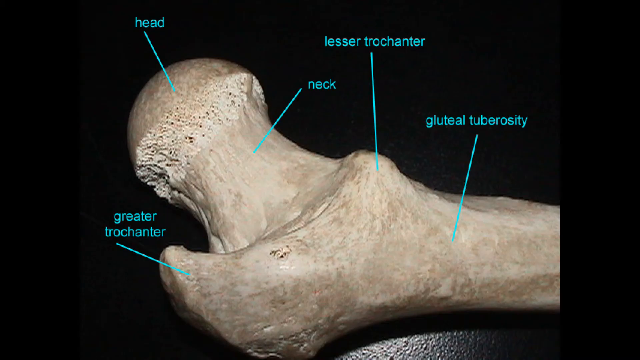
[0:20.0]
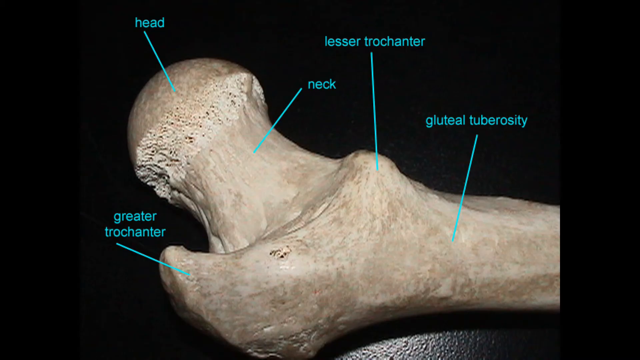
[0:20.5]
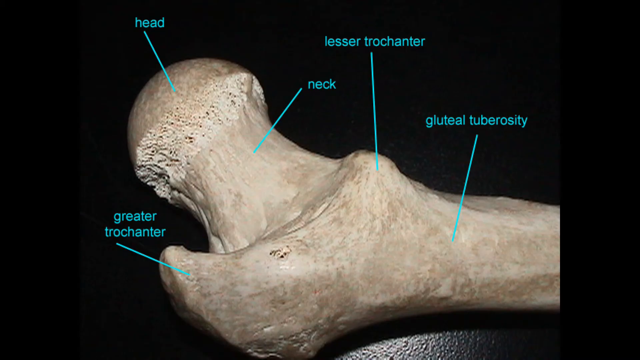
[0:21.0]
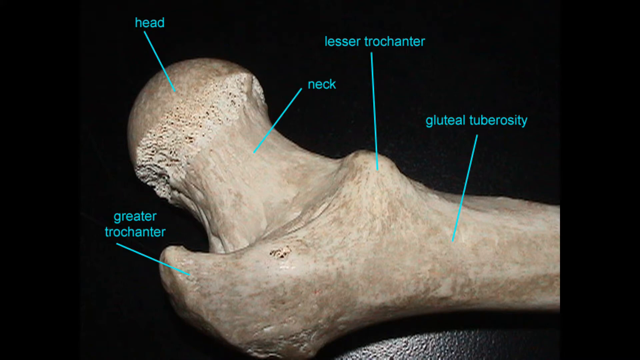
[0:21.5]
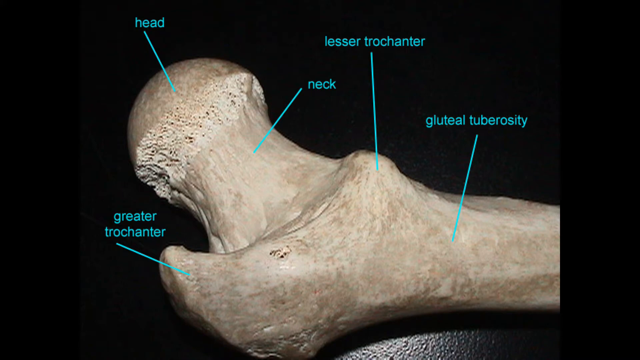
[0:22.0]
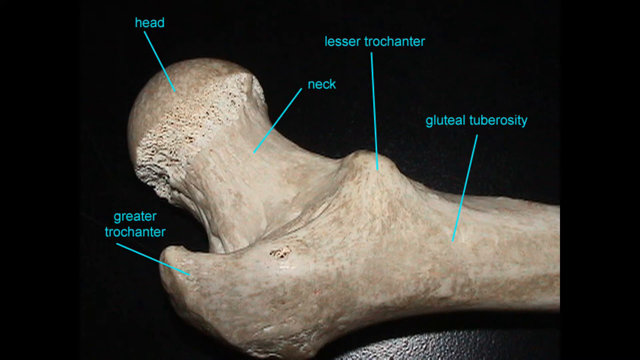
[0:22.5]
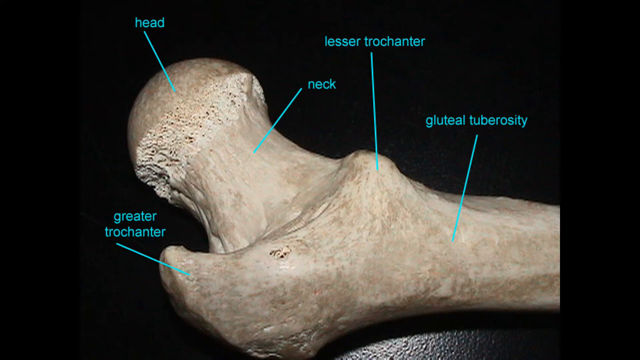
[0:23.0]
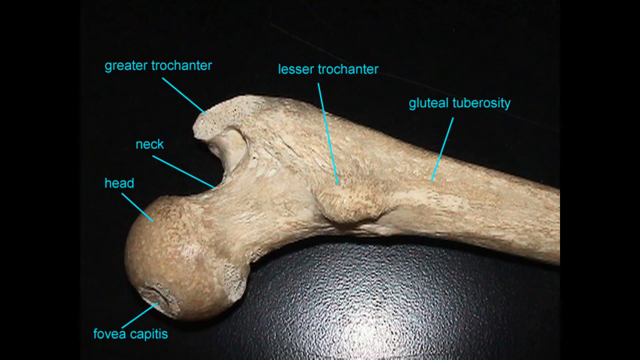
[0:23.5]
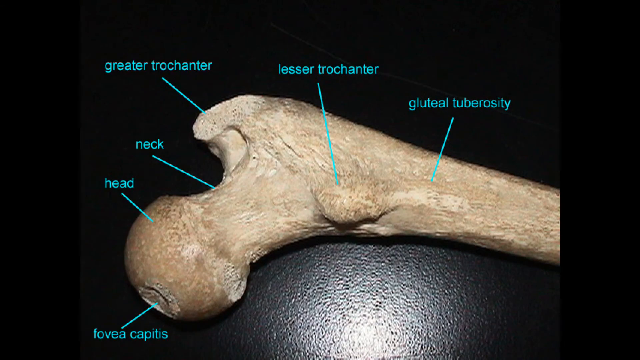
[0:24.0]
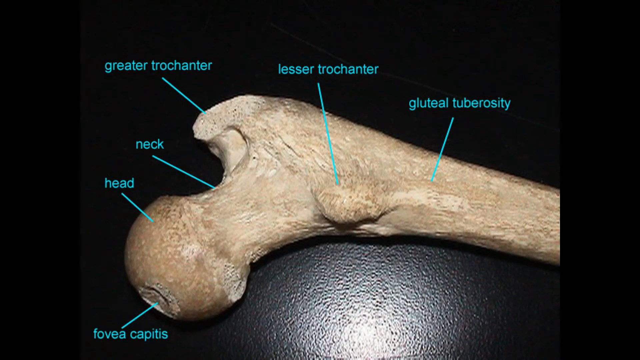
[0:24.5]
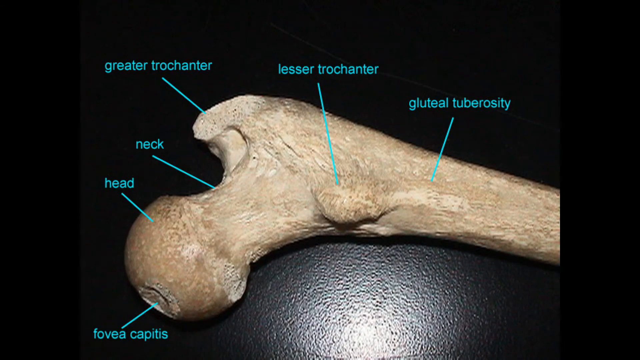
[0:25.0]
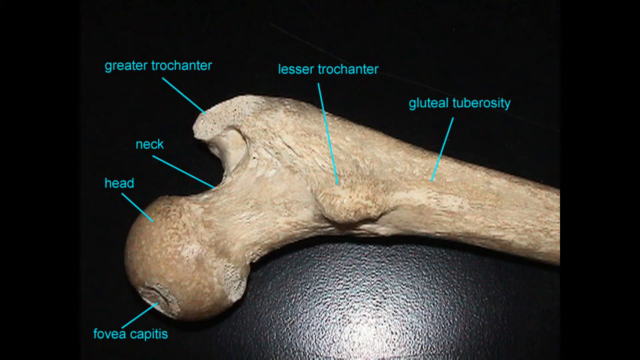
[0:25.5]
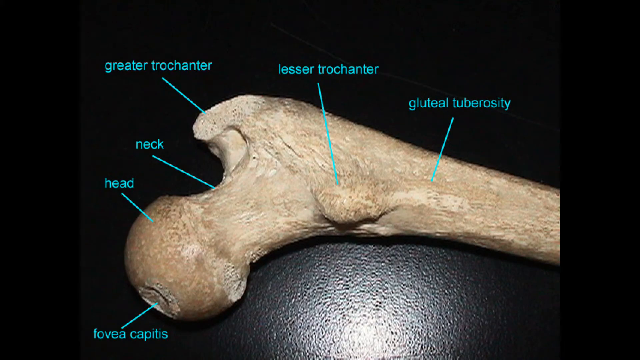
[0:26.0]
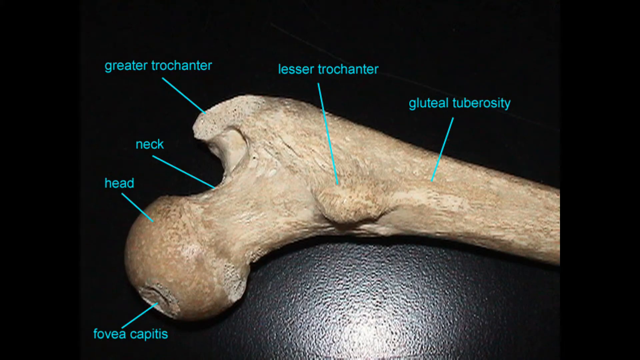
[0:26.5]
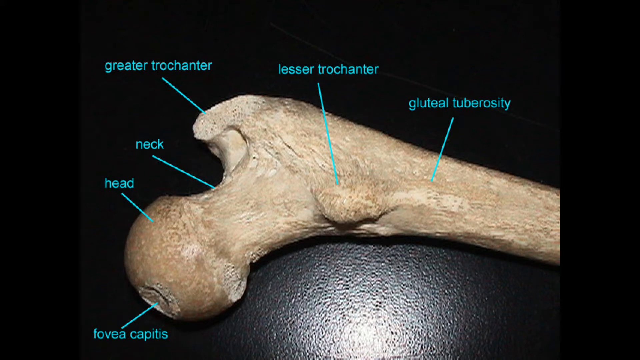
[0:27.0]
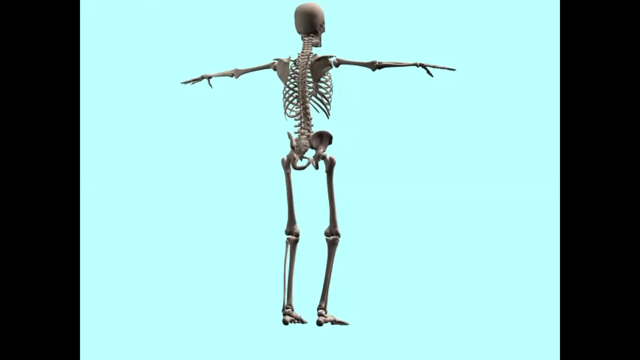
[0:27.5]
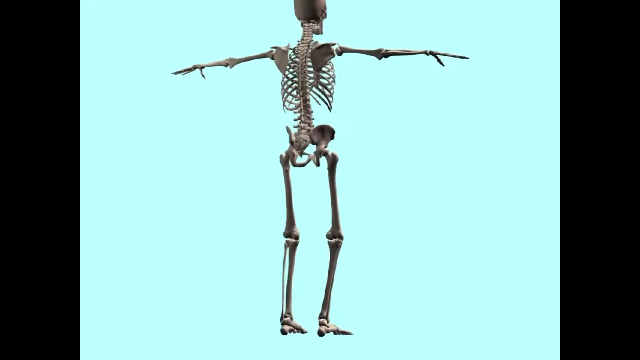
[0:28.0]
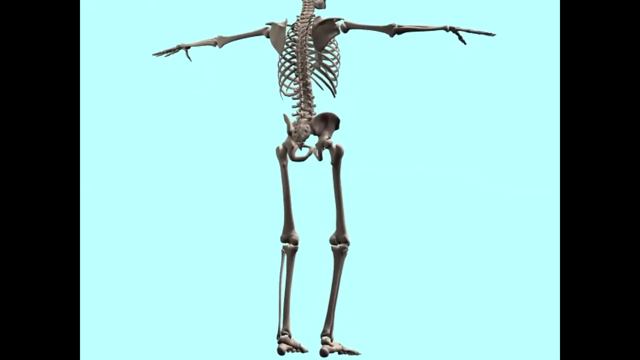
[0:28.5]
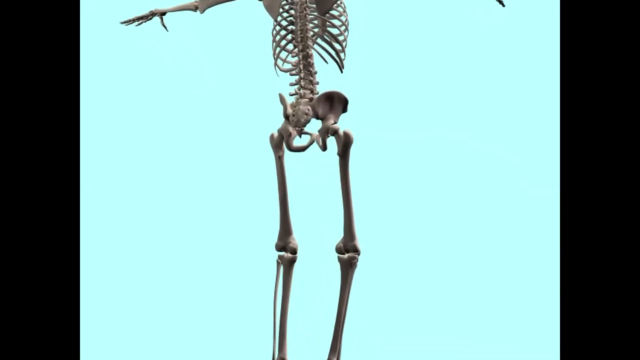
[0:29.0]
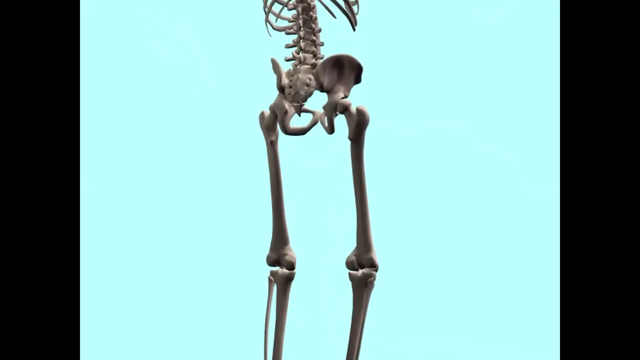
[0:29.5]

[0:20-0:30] A different view of the bone appears against a black background, with the bone white at the front. Five labels surround the bone: the label in the bottom left corner says "greater trochanter", the one in the top left corner says "head", the next one to the right says "neck", the one to the right of that says "lesser trochanter", and the label on the far right says "gluteal tuberosity". Another view of the same bone follows, this time with the head at the left-hand side in the bottom corner of the screen. Then the skeleton is shown standing up again with its arms stretched out to the sides, and the view starts to zoom in to the pelvic area again.